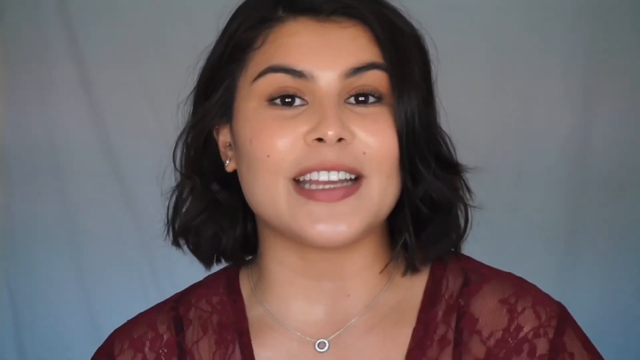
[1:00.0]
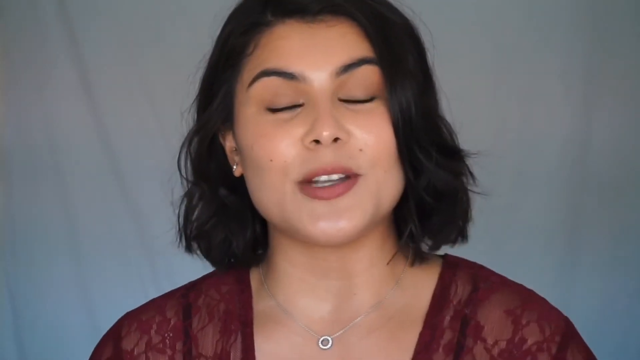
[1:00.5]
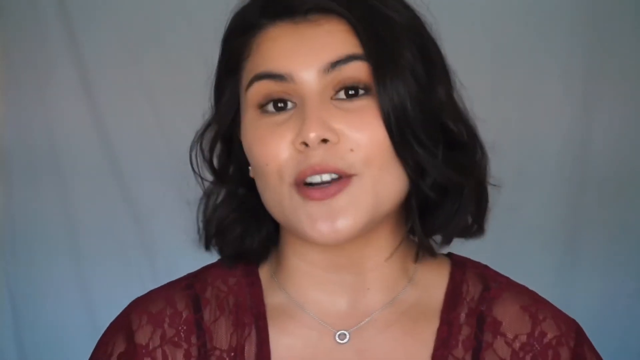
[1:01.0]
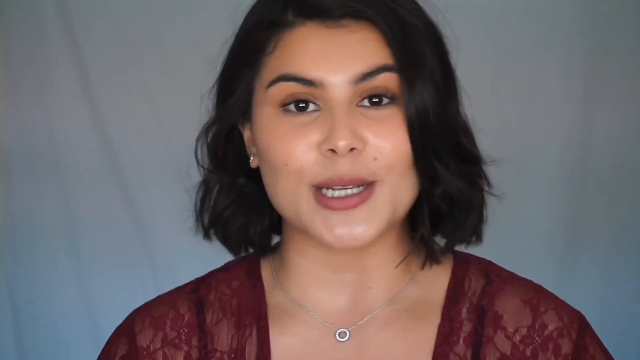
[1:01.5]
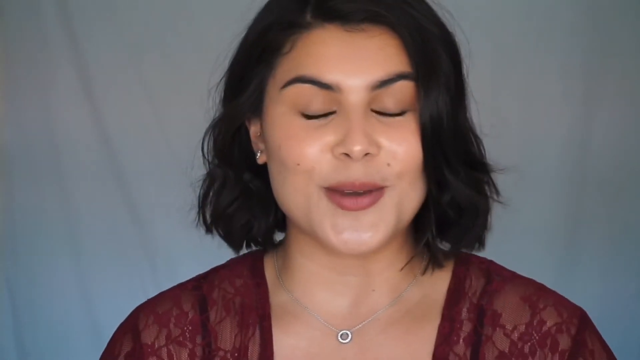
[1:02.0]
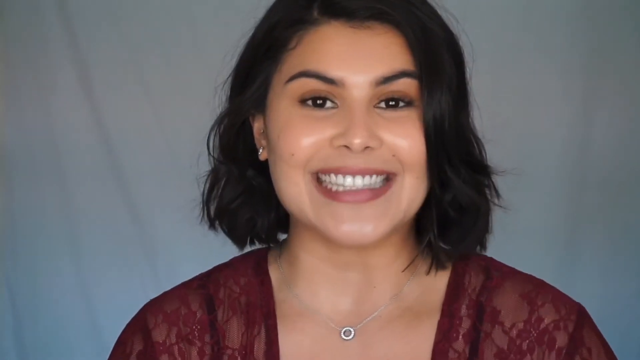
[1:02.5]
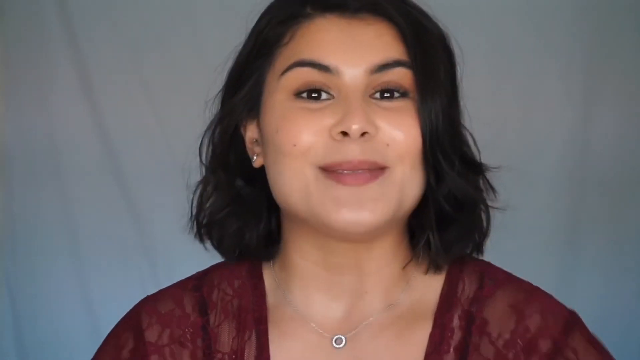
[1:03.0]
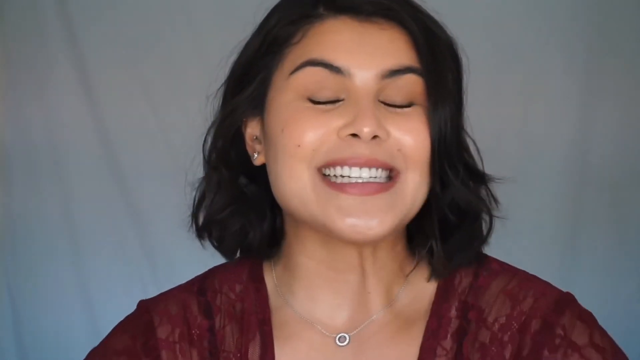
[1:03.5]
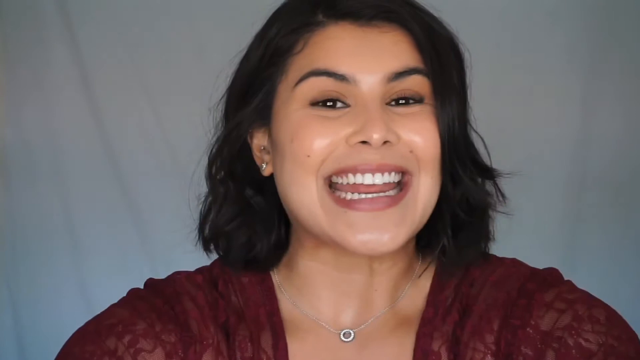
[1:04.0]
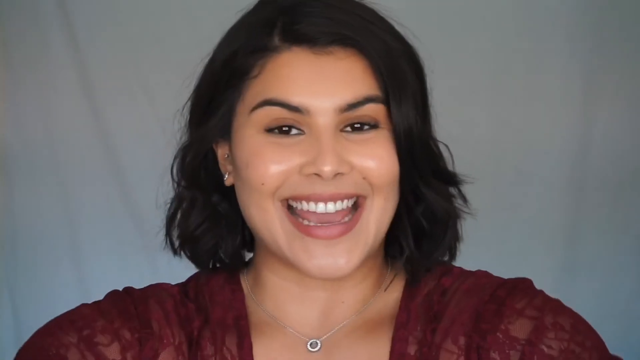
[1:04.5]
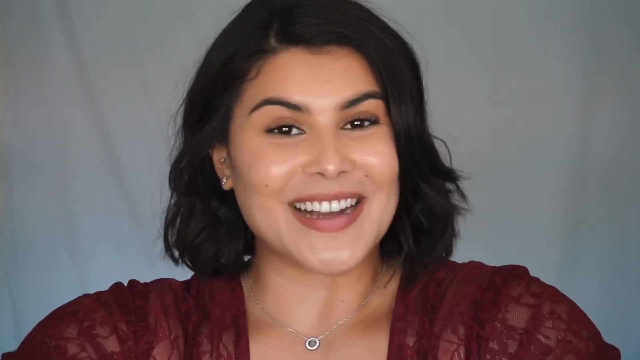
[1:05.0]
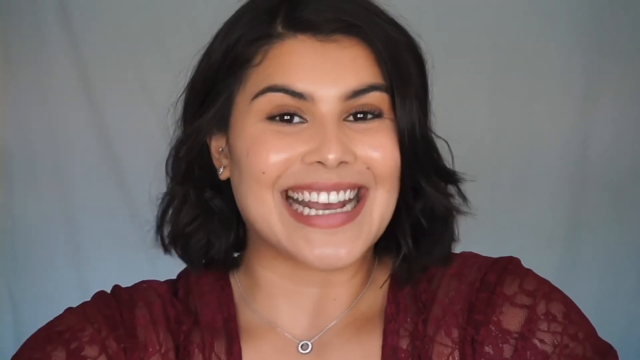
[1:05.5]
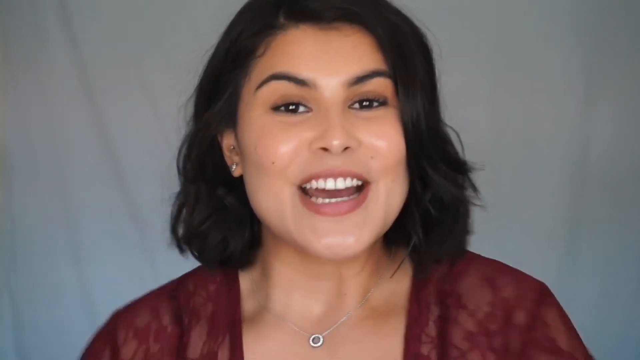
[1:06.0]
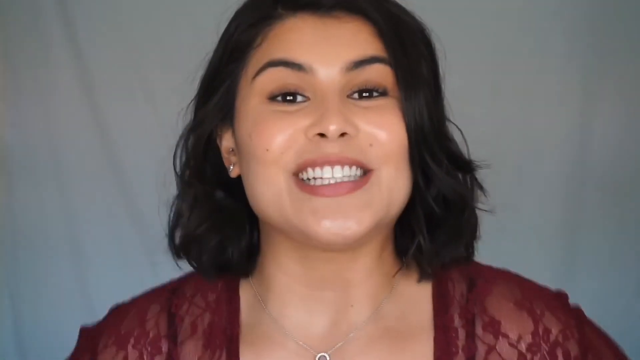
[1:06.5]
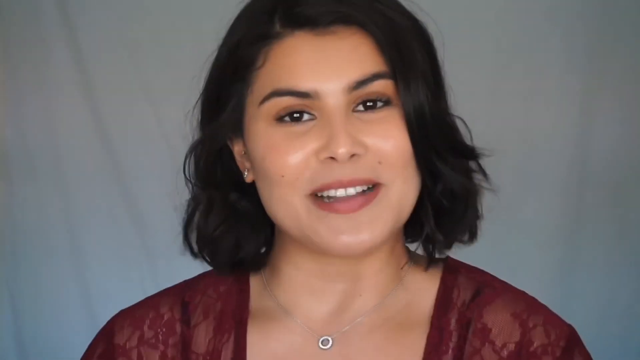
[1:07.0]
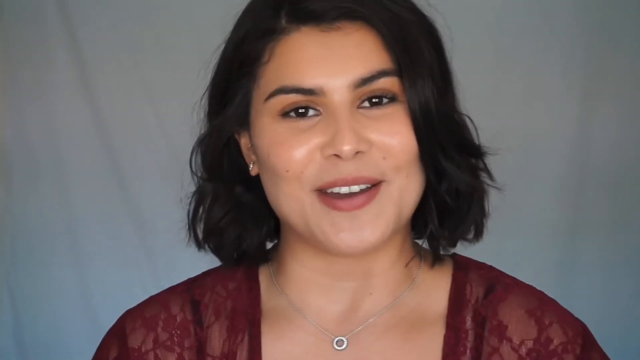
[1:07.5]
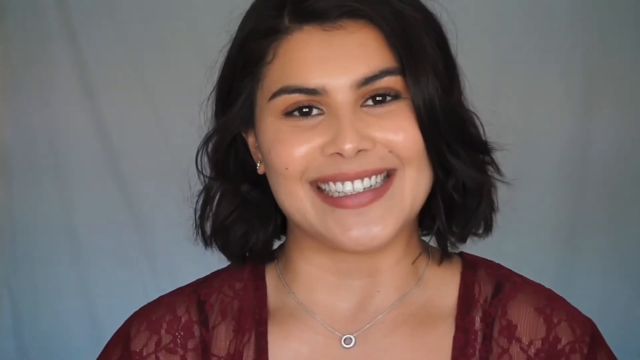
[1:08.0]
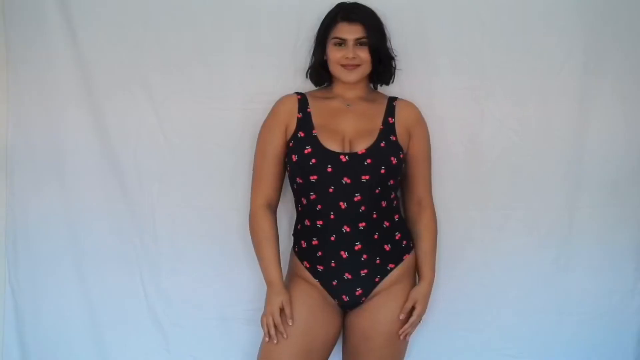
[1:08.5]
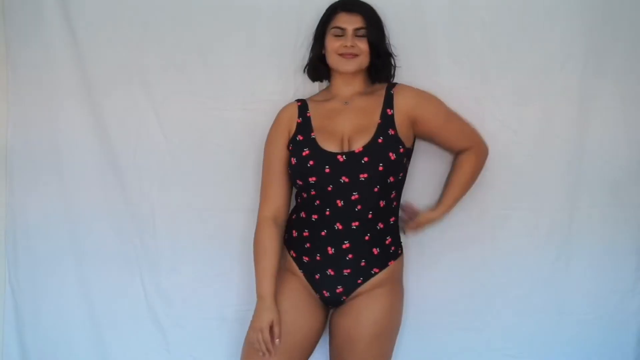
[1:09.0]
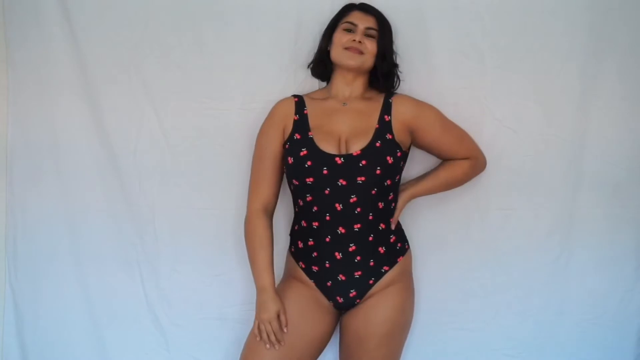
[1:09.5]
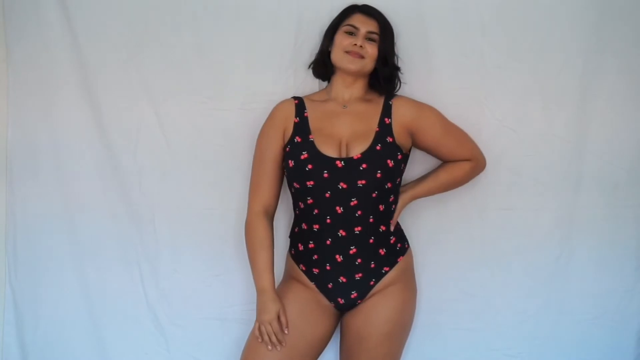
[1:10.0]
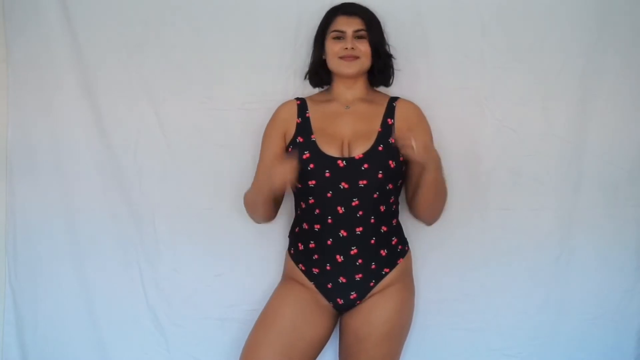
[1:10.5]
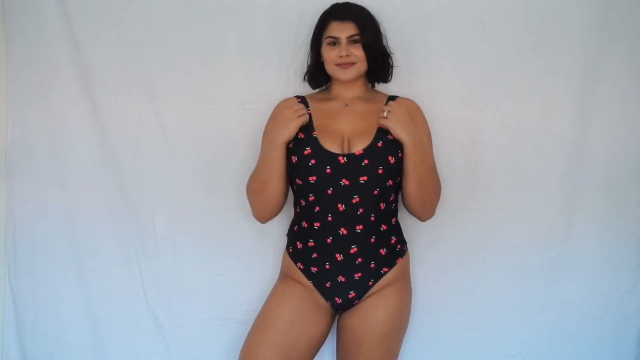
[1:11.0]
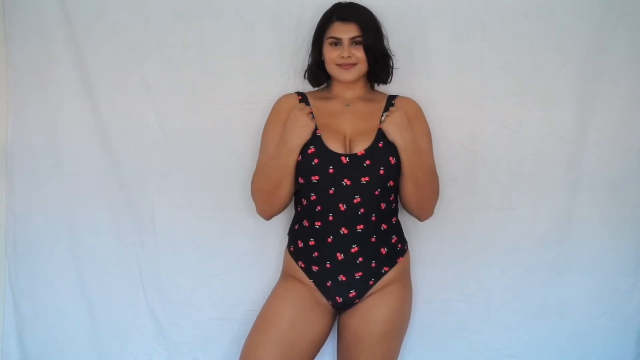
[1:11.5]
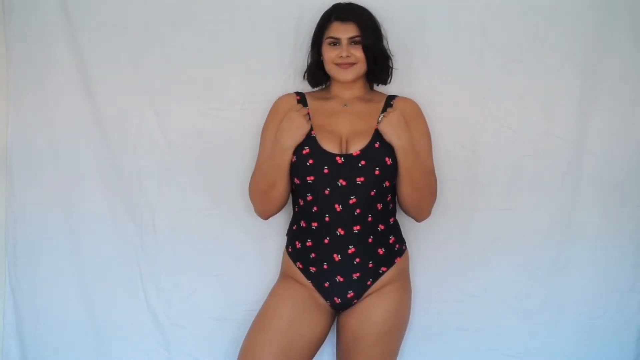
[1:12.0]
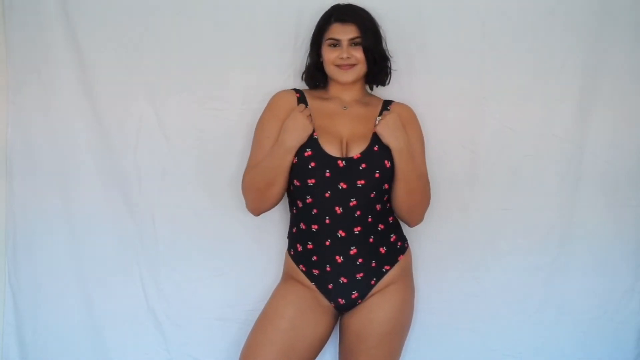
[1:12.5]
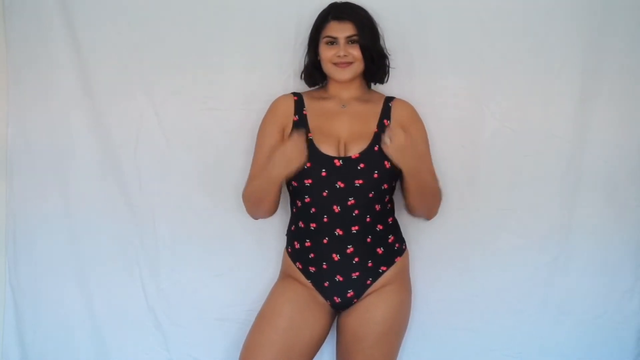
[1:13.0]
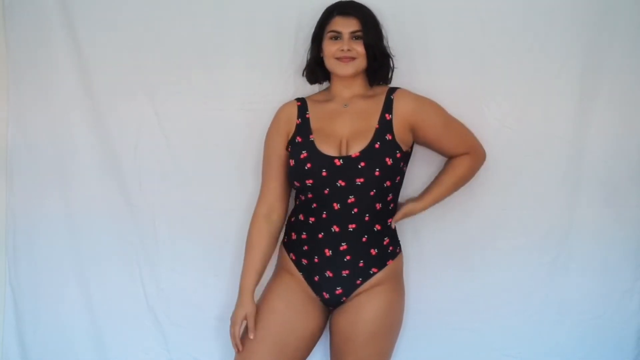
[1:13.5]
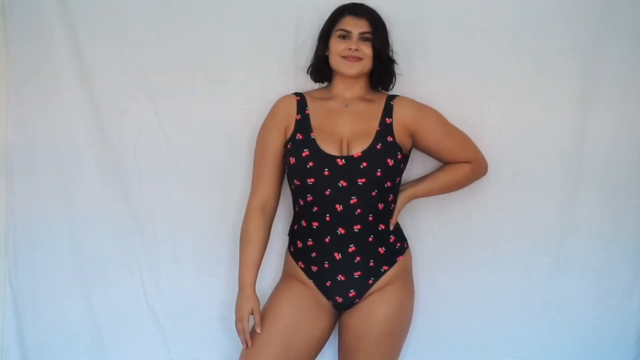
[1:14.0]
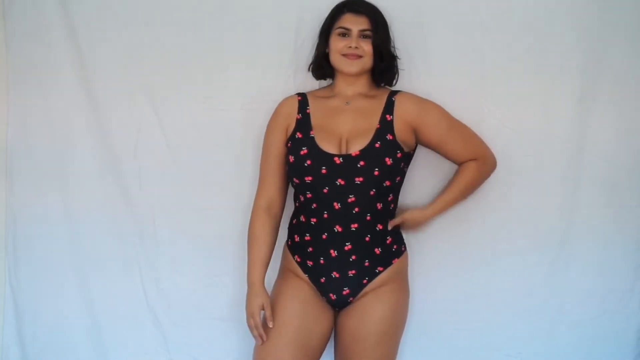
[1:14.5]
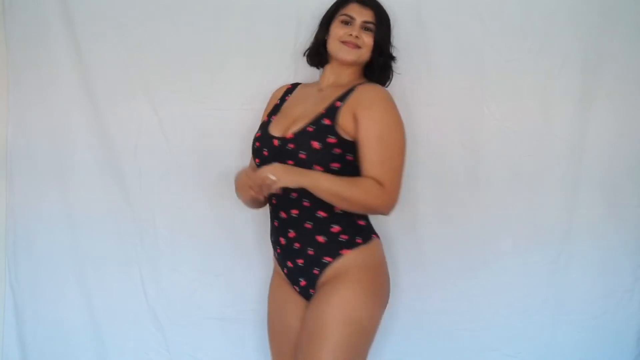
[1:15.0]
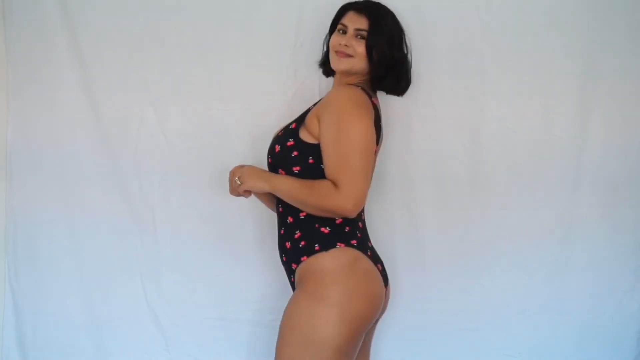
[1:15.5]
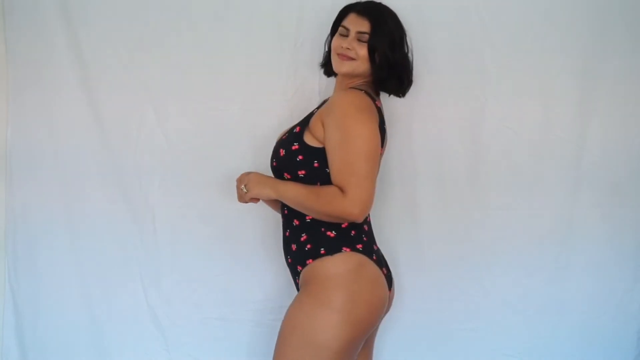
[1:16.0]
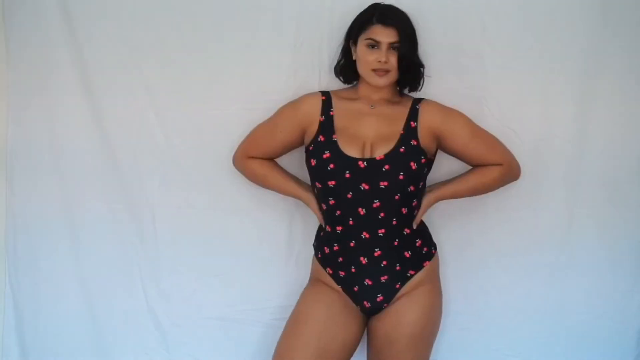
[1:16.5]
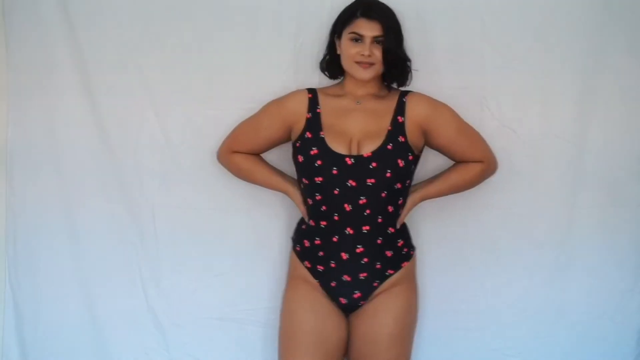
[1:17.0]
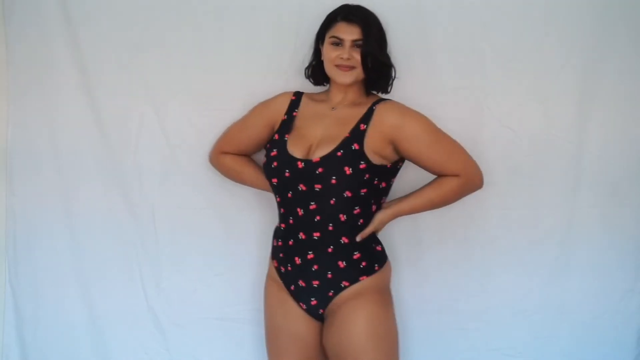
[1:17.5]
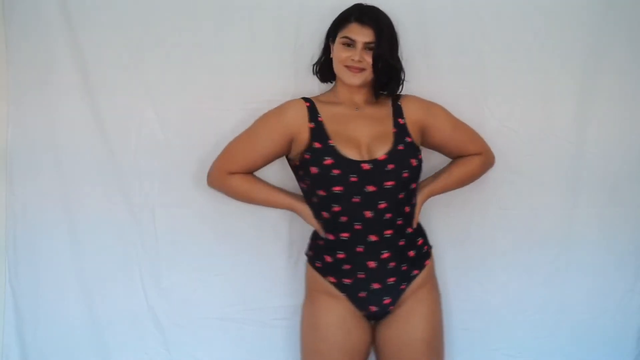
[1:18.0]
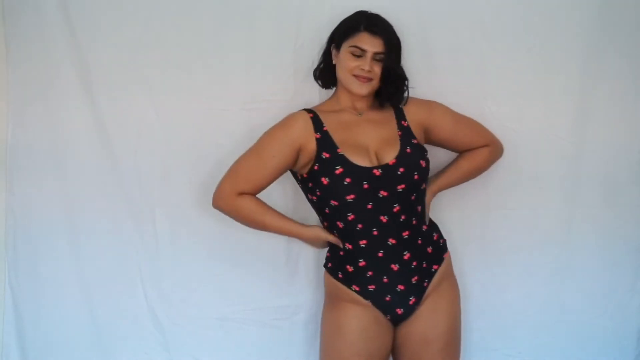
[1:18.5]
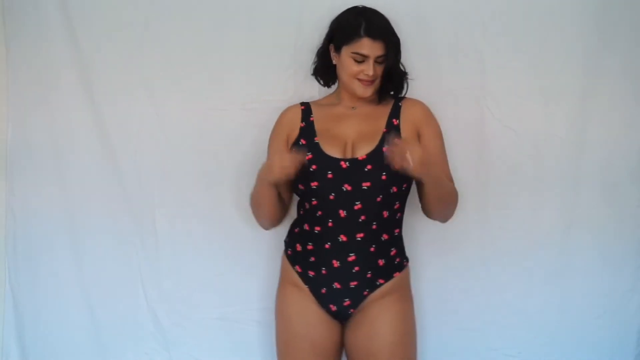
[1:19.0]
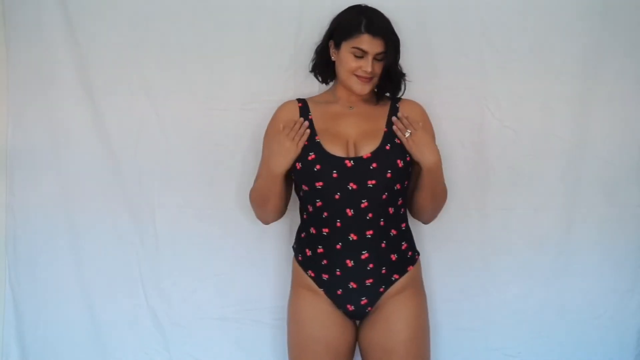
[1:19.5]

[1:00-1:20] The woman continues speaking directly to the camera in a close-up shot, moving her shoulders slightly as she speaks. She looks very animated and smiles very broadly, then shrugs slightly before a jump cut to the same close-up, where her smile is even wider and she starts to look quite excited. She stops speaking and smiles, and the video cuts to a wider shot. She is still standing in front of a white curtain, now visible from the top of her head to halfway down her thighs. Instead of the burgundy lace top, she now wears a swimming costume or bathing suit: a black one-piece covered with illustrations of cherries, each with two cherries and some green leaves, with occasional single cherries as well. She has her hands by her sides, then lifts her left hand to her hip. She poses for the camera, transferring her weight onto one hip, moving her hands up to the straps of the costume and moving her shoulders. She puts her hand back on her hip before turning to show her profile and the side of the bathing suit. After a jump cut she faces forward again from the same angle and view, with both hands on her hips this time, twisting her body slightly to show different views of the bathing suit before putting her hands on the straps again.